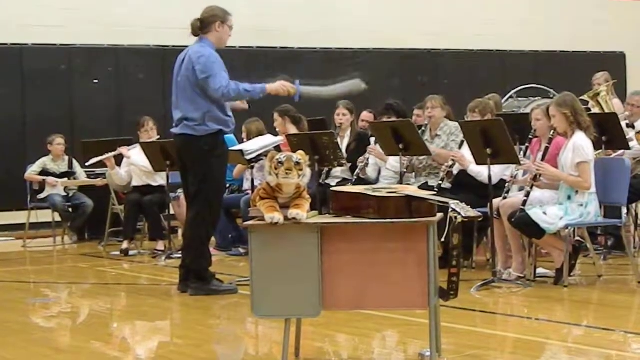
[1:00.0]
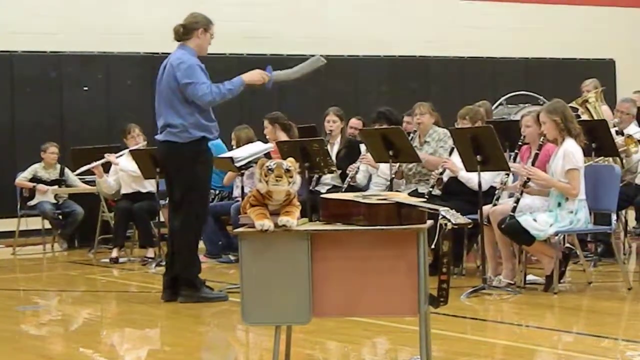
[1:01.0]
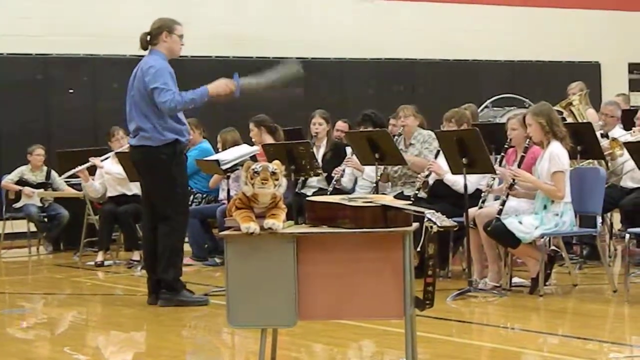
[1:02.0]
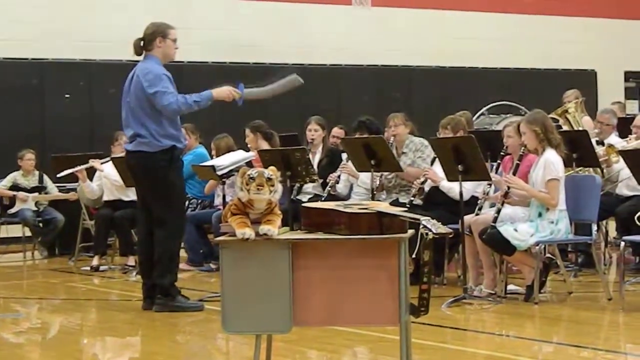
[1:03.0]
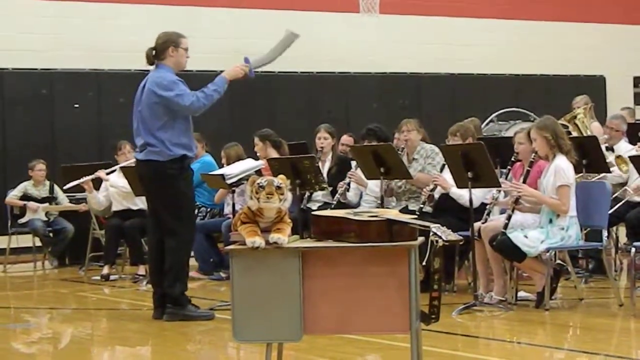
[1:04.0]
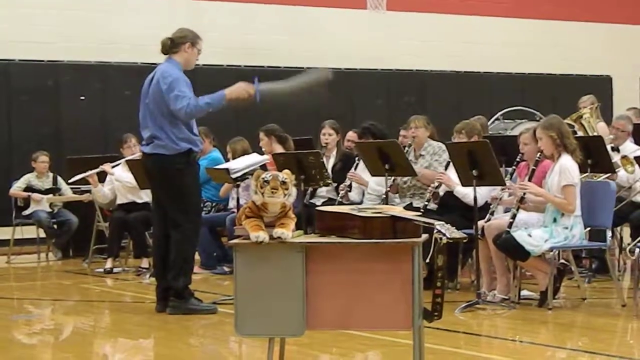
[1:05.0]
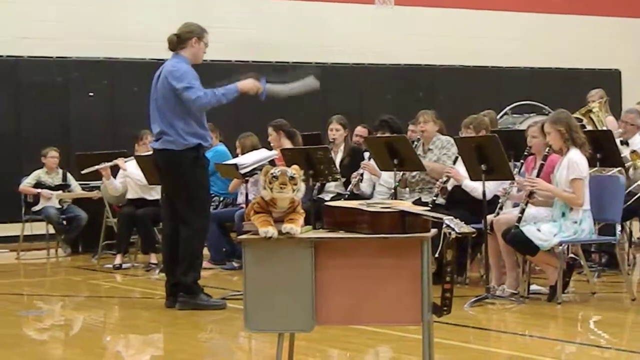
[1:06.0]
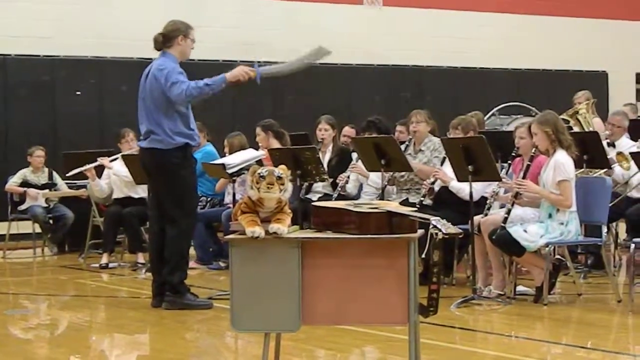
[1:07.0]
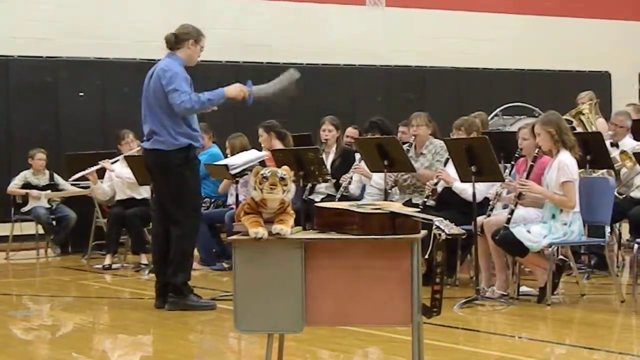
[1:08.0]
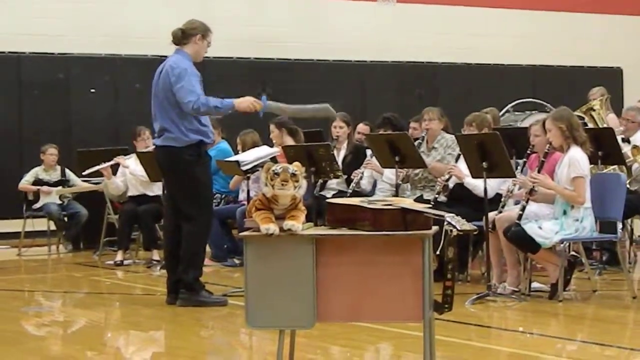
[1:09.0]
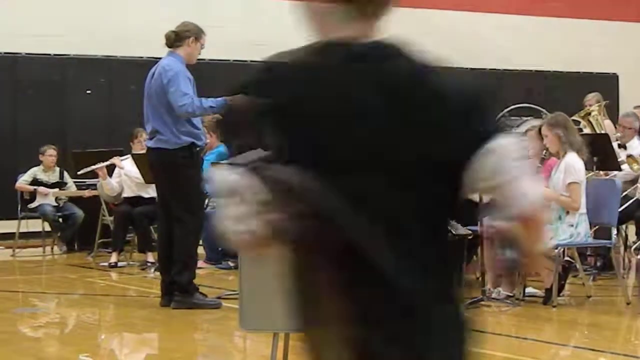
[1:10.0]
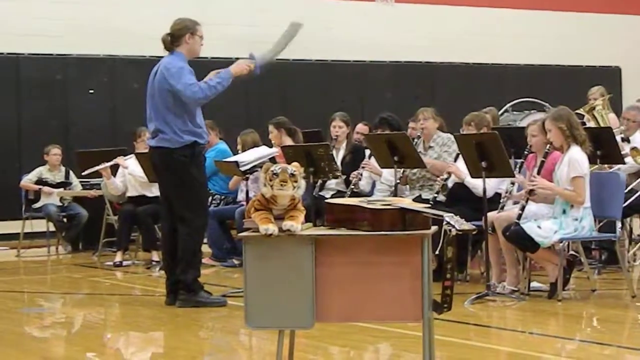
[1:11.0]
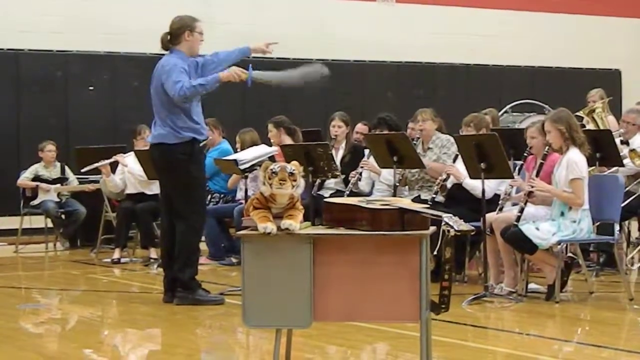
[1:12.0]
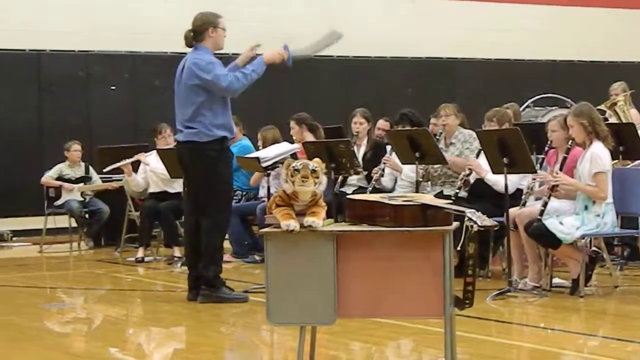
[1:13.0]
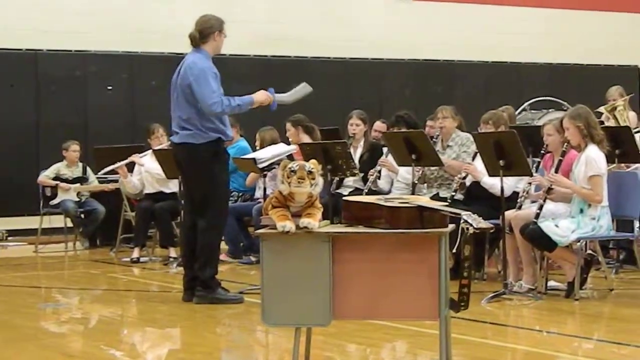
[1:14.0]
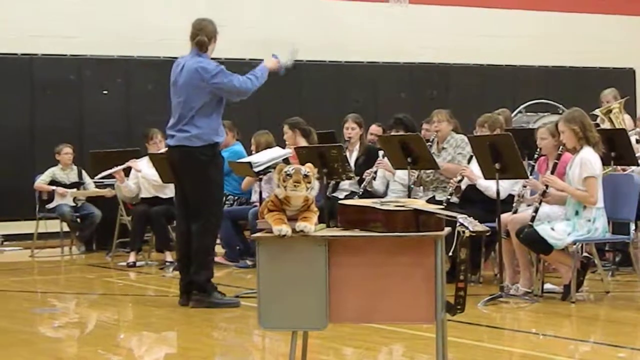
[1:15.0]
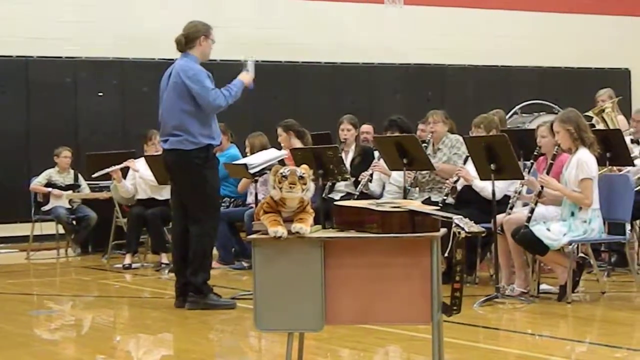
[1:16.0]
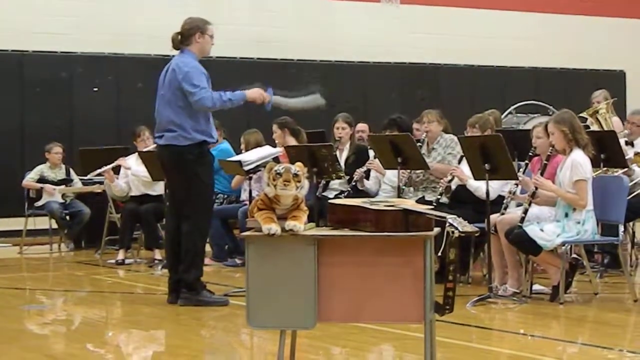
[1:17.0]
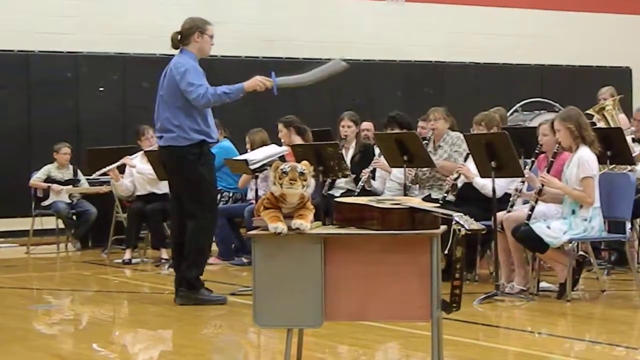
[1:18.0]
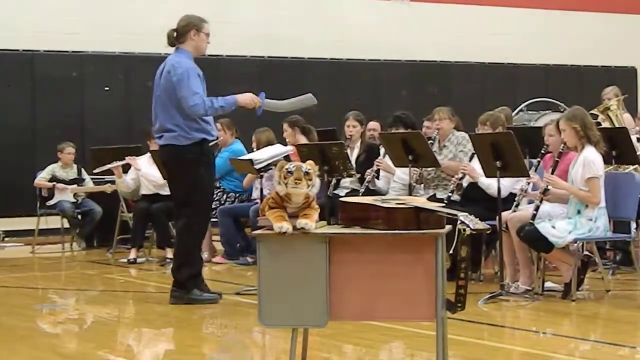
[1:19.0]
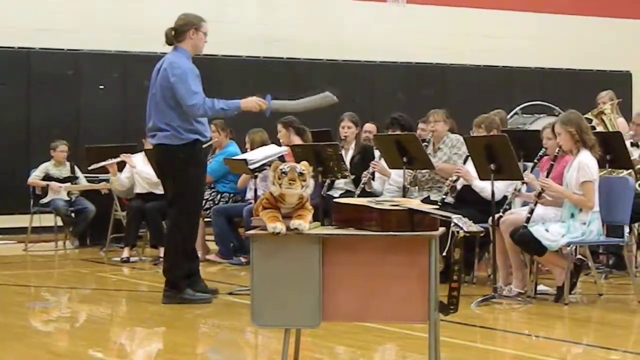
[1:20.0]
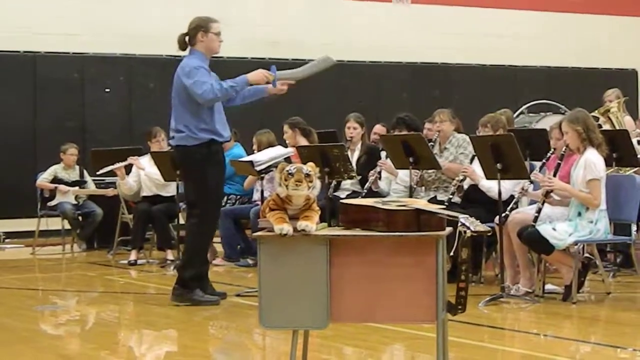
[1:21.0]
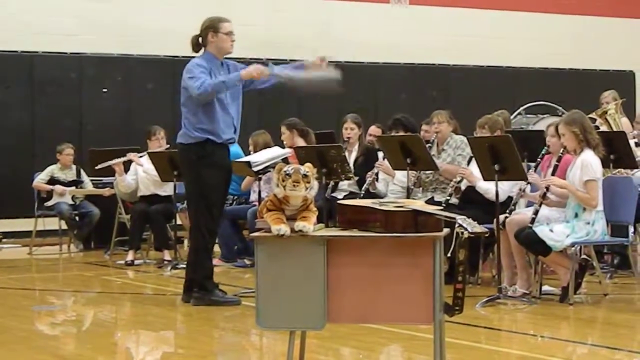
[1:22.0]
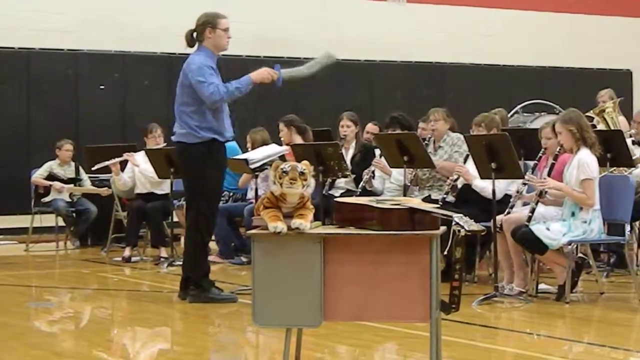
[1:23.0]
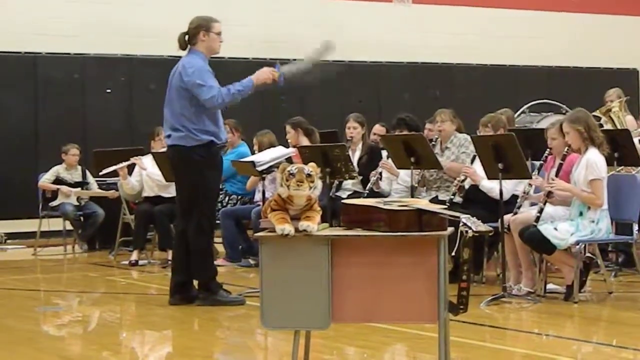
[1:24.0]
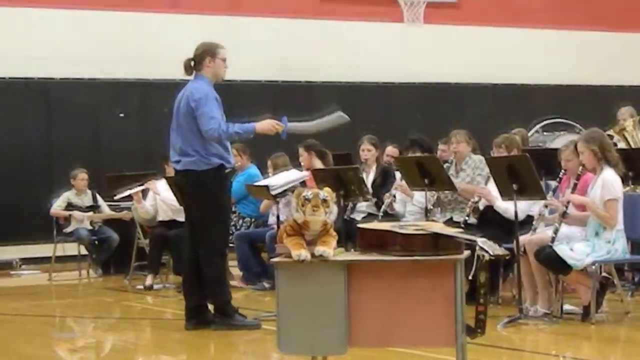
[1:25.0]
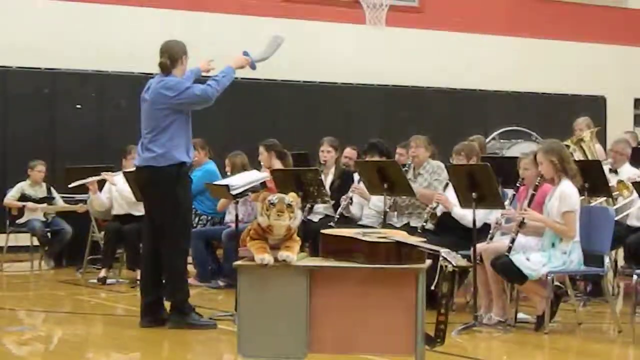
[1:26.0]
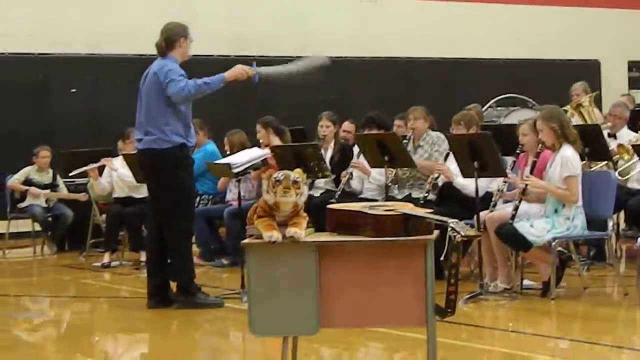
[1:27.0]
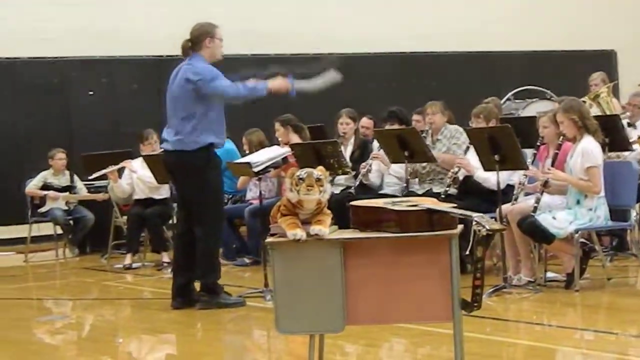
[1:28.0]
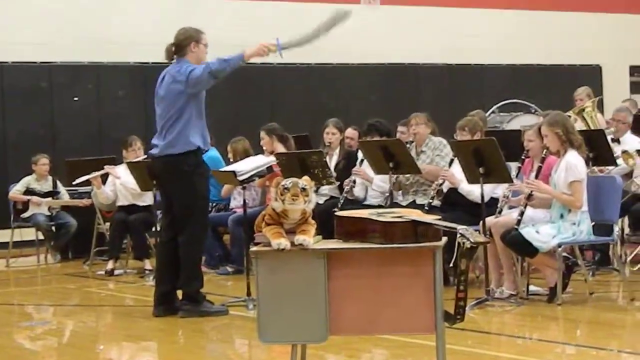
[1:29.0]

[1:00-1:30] A man in a long-sleeved blue shirt and black pants directs what looks like an amateur or school band performing in a gymnasium. The camera is mostly static and focuses on him. He holds a plastic toy sword in his right hand and uses it to conduct the group as if it were a baton, continually moving it back and forth. He periodically raises his other arm and gestures to certain members of the group, pointing to them either to play or to stop. His hair is pulled back in a ponytail and he wears glasses. The camera mostly focuses on the front row of the group: some young girls and women playing woodwinds, and a boy playing an electric guitar. At one point a young boy in a dark shirt appears to run in front of the camera. In the foreground in front of the band is a desk with a stuffed tiger and a guitar resting on top of it. Behind the players are the gymnasium walls with a basketball hoop and some black padding along them, and the gymnasium floor is shiny and light brown.